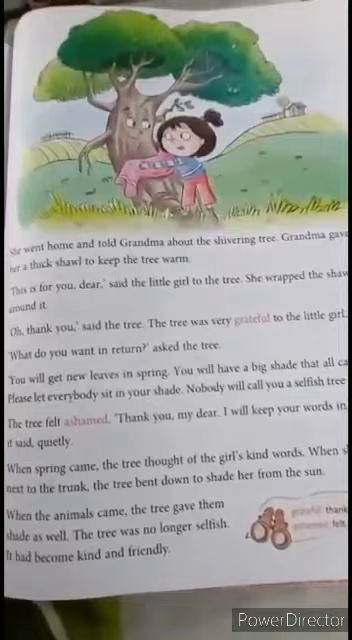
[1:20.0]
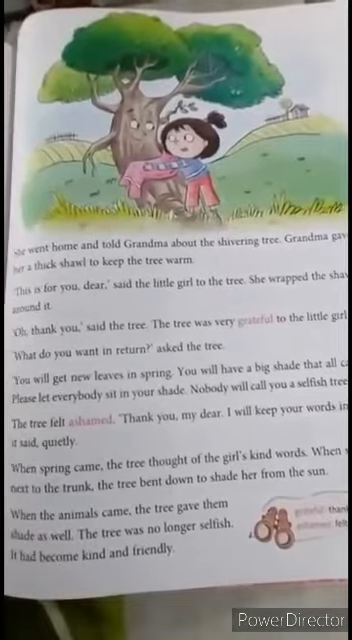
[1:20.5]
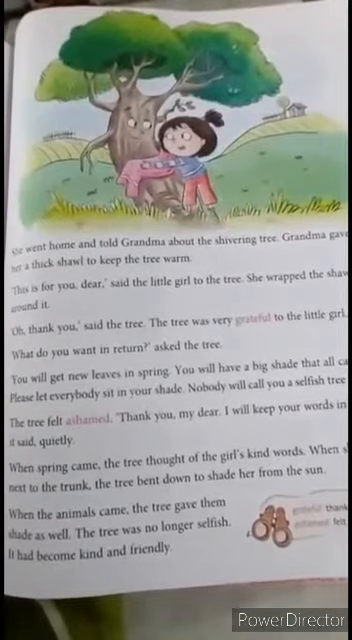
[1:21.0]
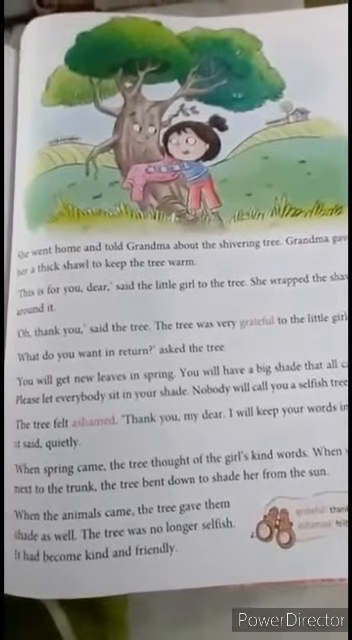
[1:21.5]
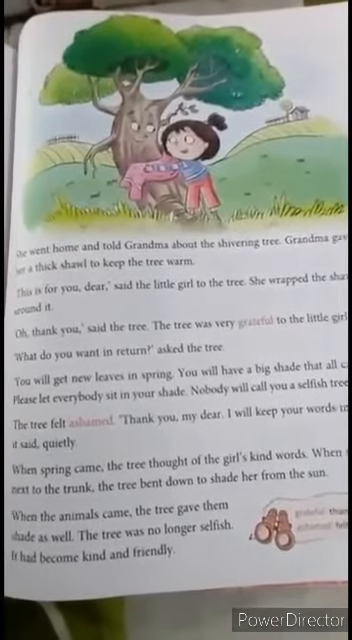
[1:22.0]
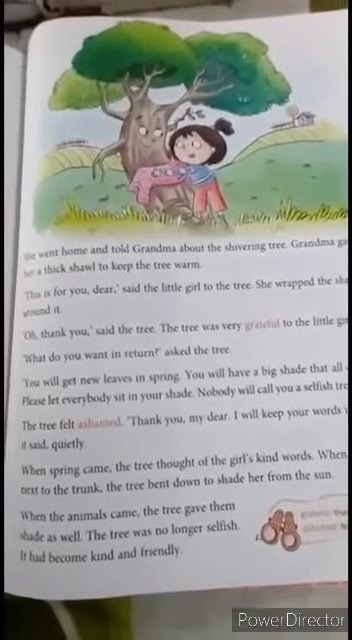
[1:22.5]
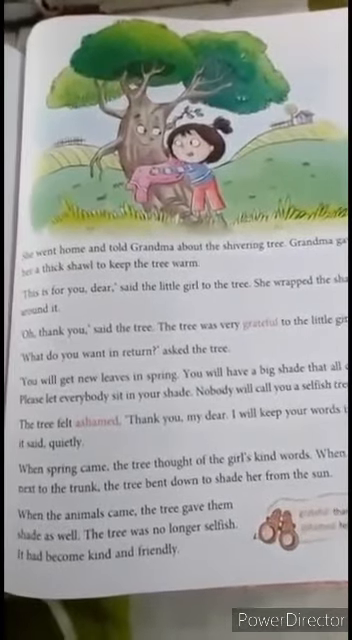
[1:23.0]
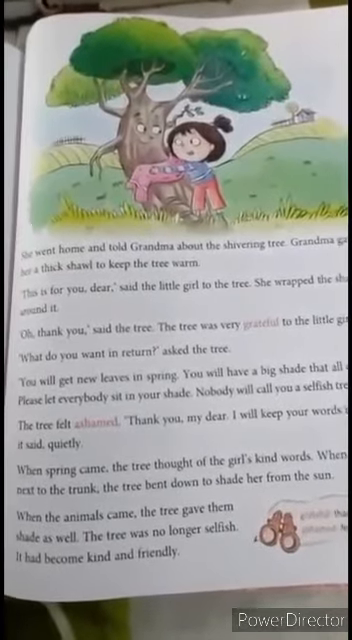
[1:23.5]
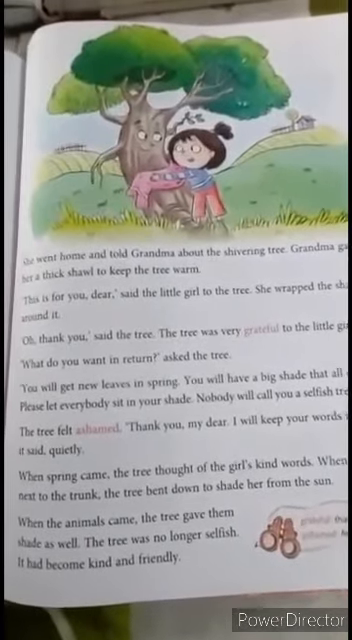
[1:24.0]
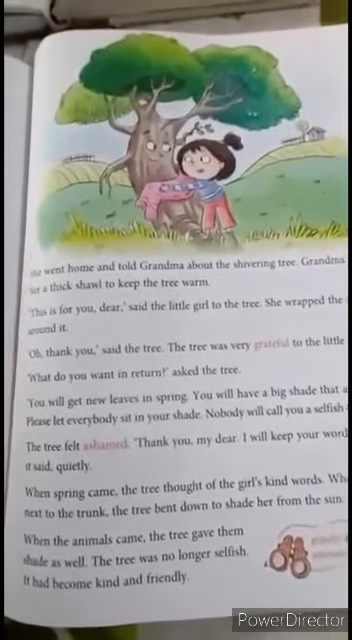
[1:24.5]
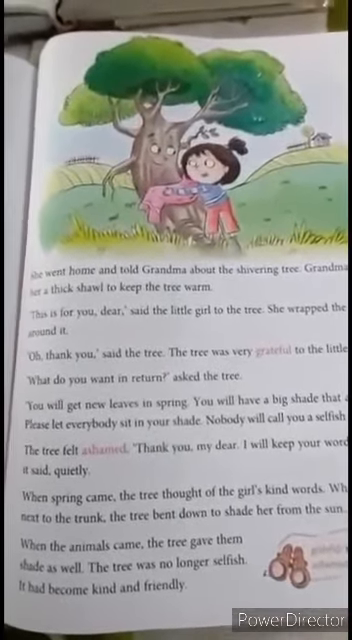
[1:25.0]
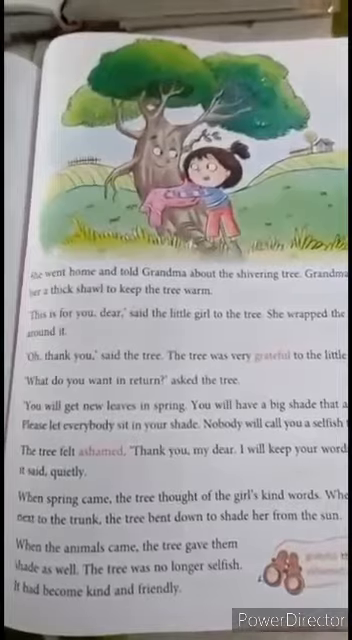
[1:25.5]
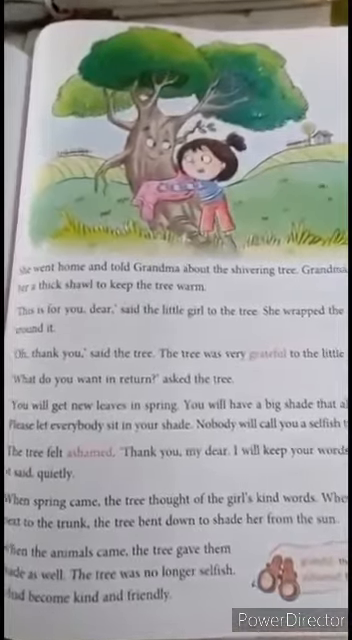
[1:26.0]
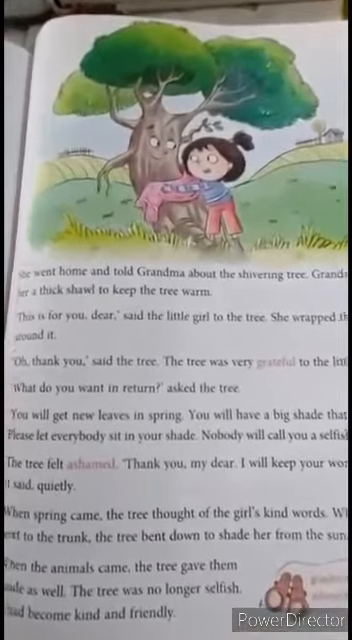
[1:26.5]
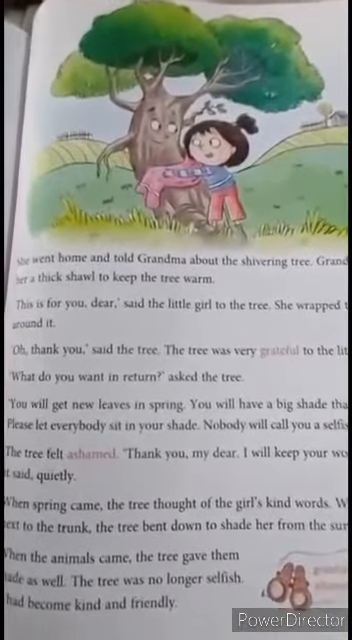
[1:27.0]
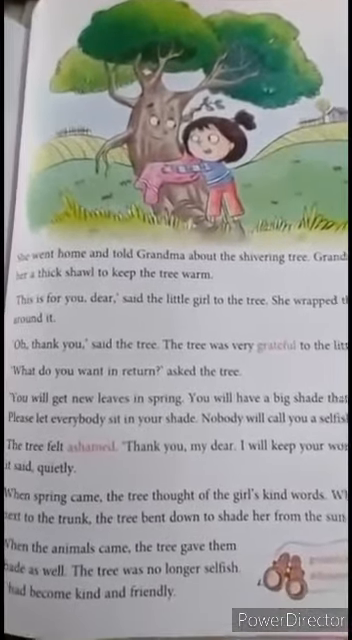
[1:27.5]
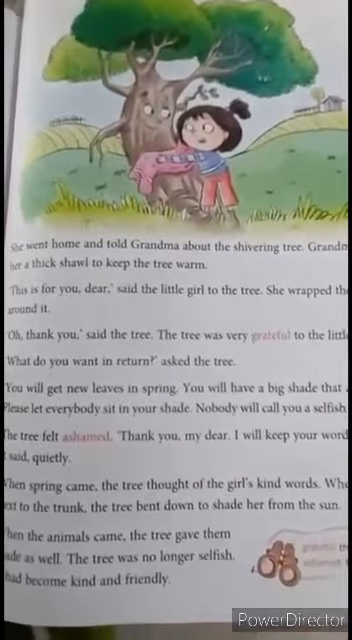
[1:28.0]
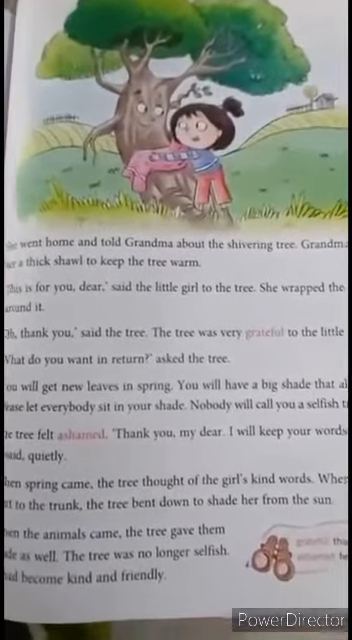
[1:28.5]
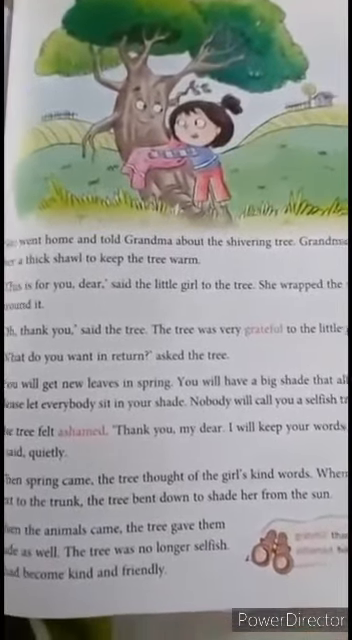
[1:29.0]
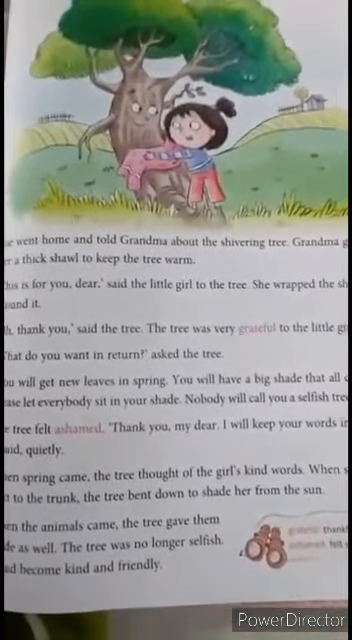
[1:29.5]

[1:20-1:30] An opened children's book shows an illustration at the top of the page and writing at the bottom; the title has not been shown. The illustration shows a tree looking to its left and a little girl looking to her right, the two looking at one another. The girl has brown hair and big eyes. She wears pink pants and a shirt or jacket that she appears to be putting on or taking off, with a blue top underneath.